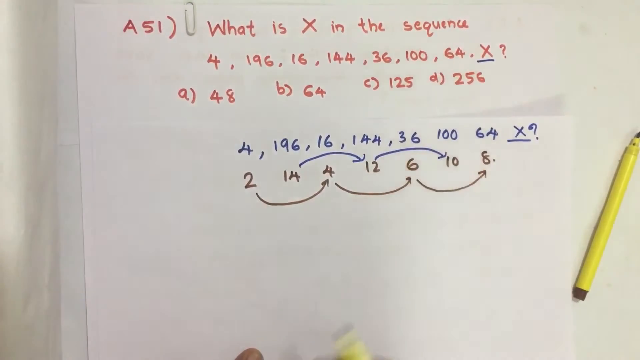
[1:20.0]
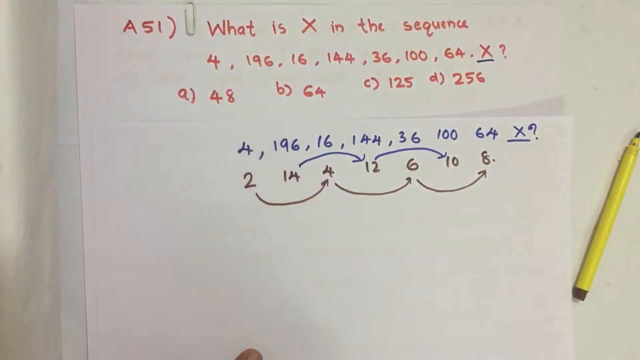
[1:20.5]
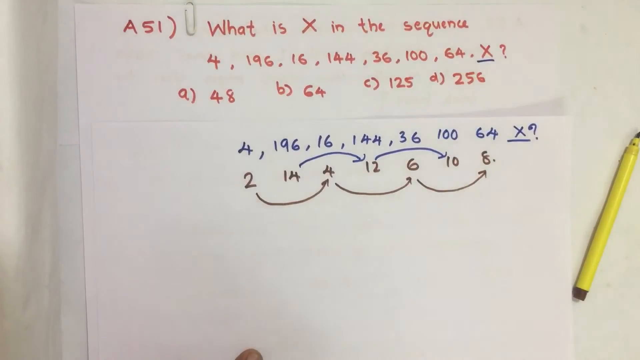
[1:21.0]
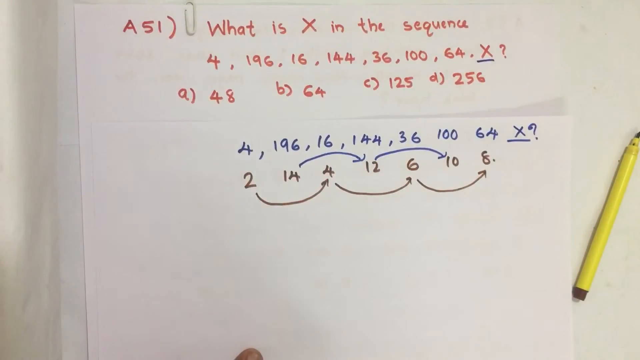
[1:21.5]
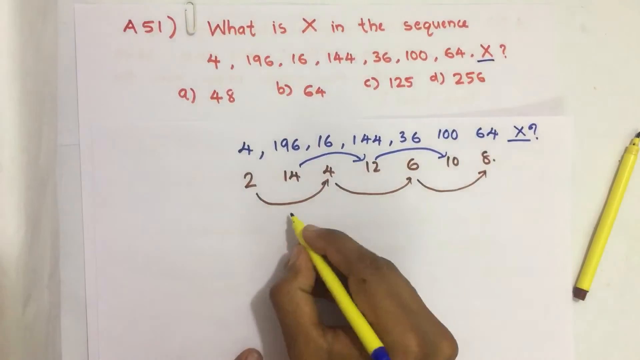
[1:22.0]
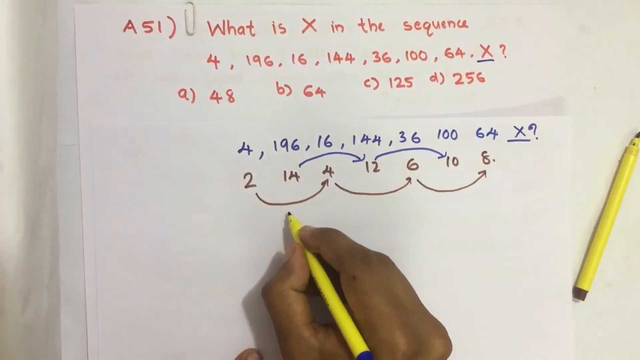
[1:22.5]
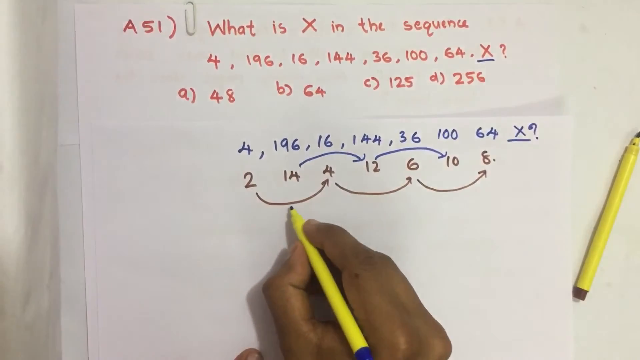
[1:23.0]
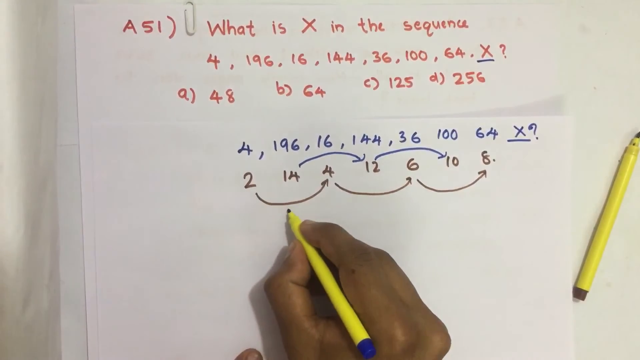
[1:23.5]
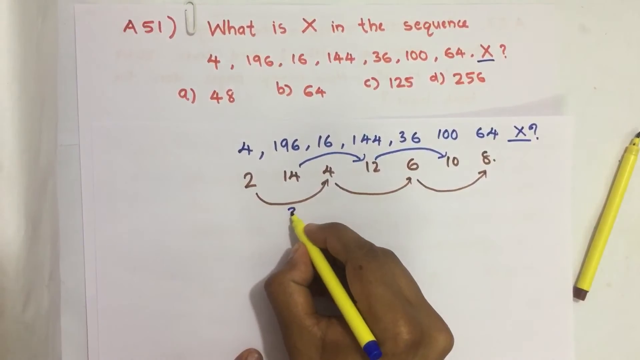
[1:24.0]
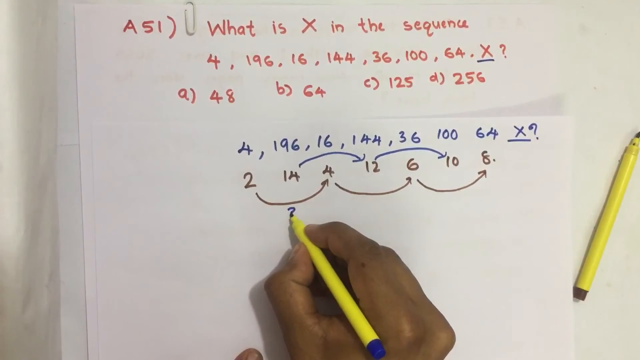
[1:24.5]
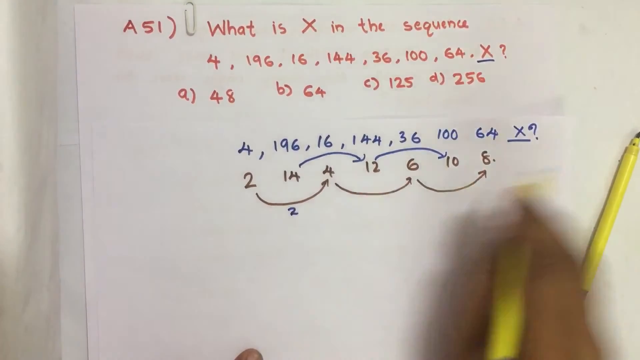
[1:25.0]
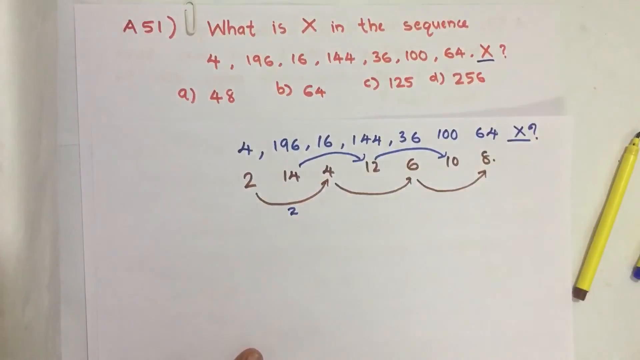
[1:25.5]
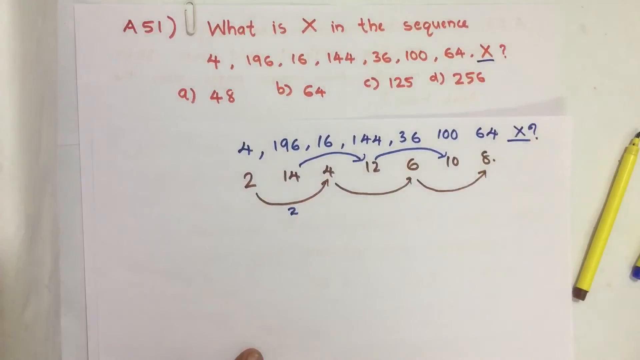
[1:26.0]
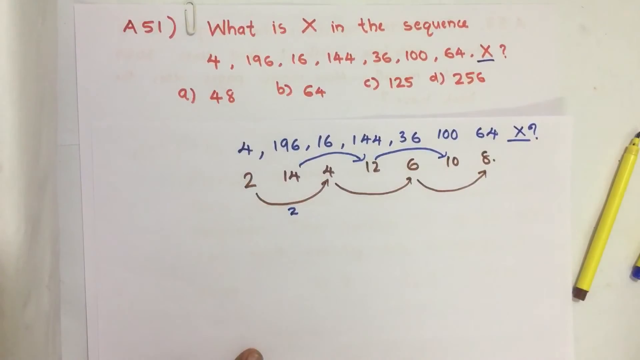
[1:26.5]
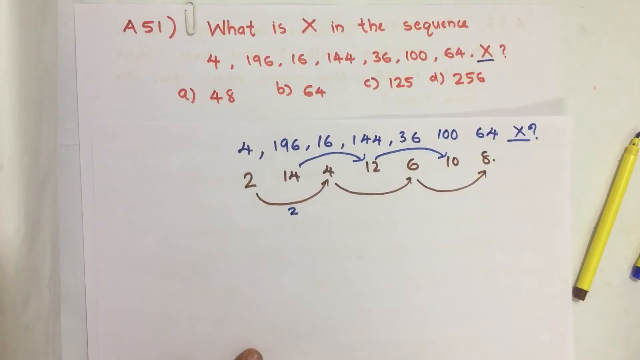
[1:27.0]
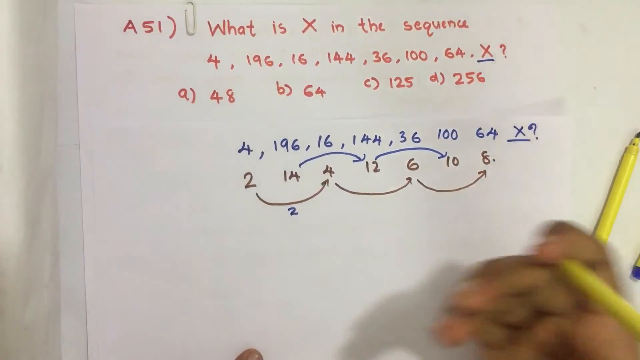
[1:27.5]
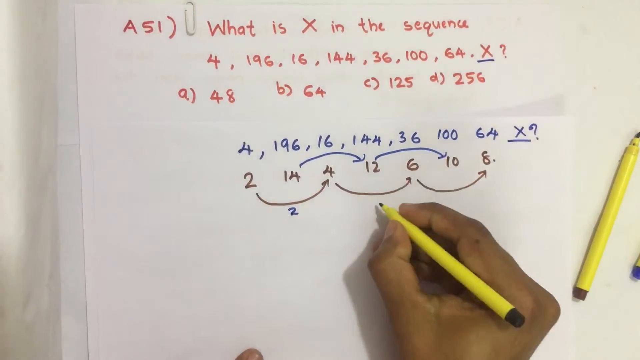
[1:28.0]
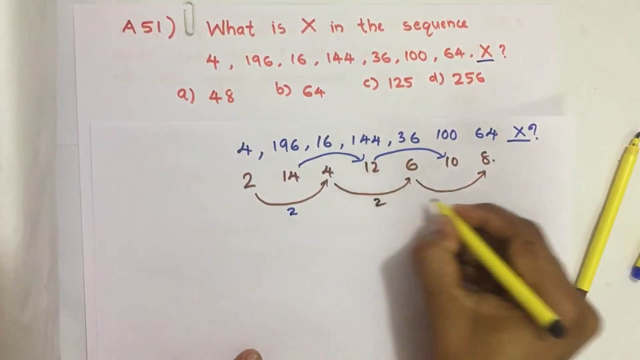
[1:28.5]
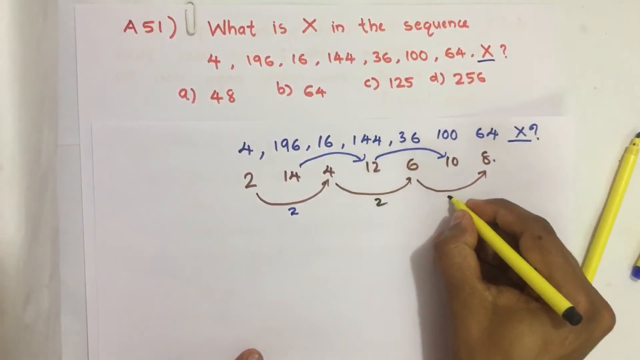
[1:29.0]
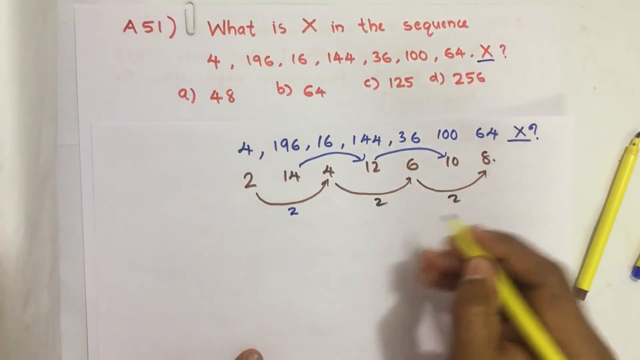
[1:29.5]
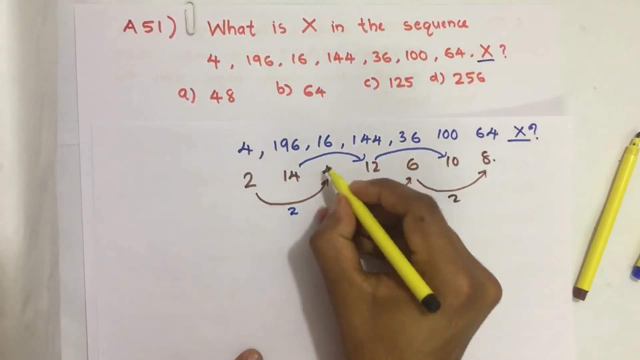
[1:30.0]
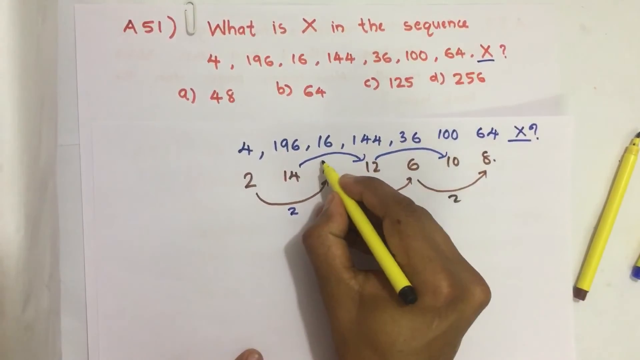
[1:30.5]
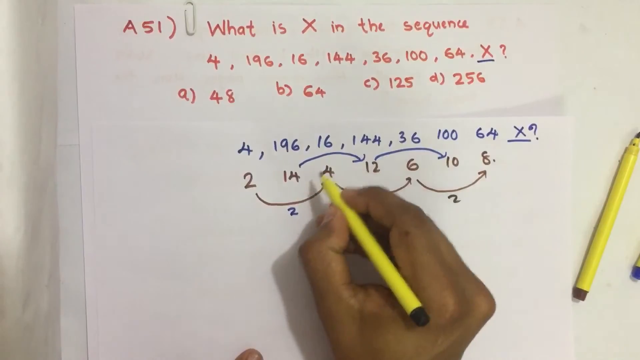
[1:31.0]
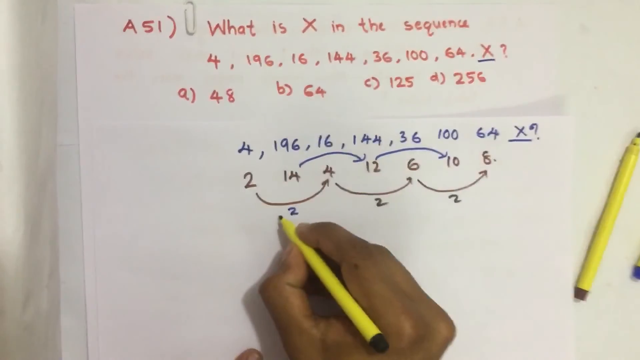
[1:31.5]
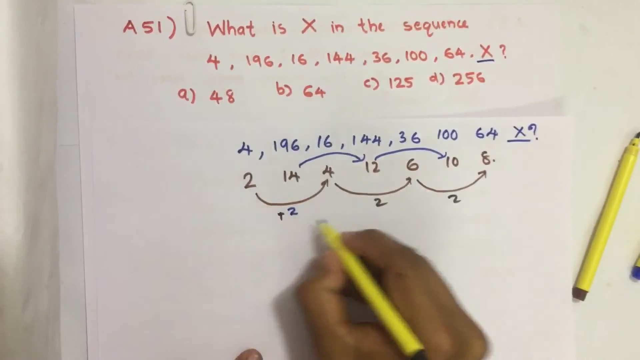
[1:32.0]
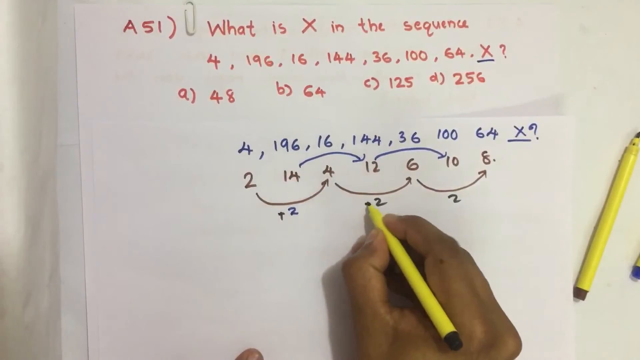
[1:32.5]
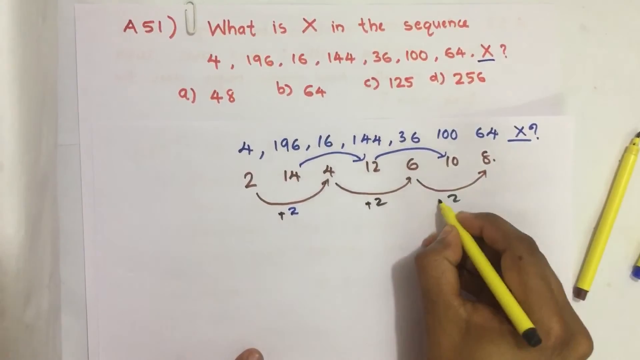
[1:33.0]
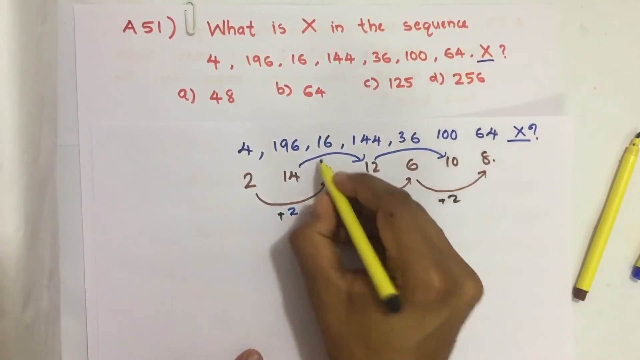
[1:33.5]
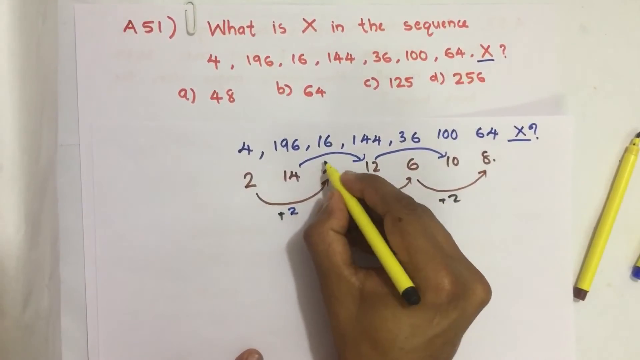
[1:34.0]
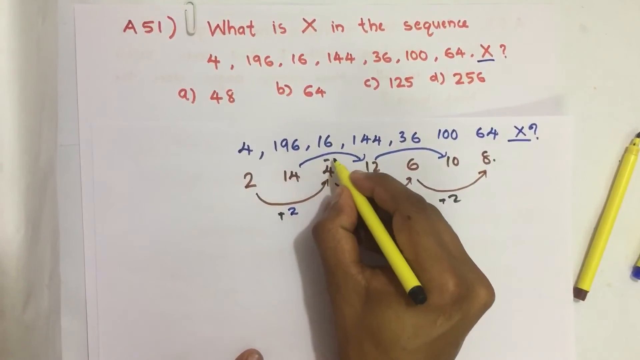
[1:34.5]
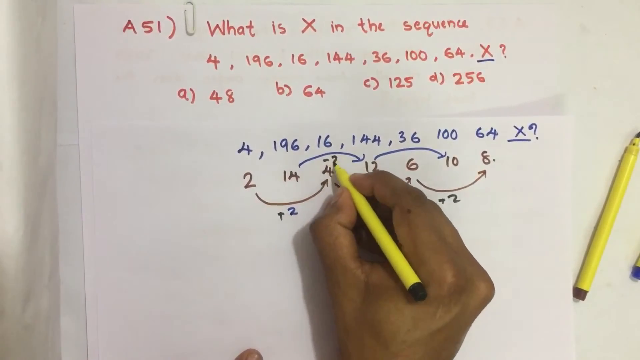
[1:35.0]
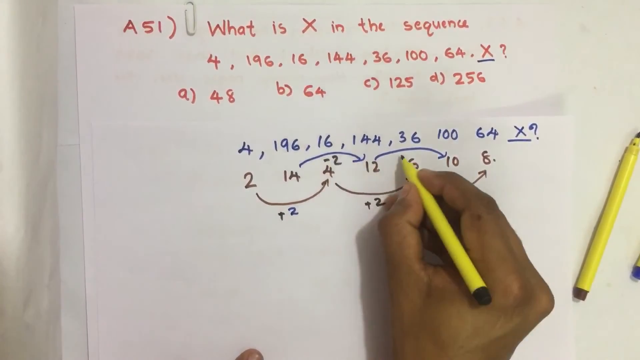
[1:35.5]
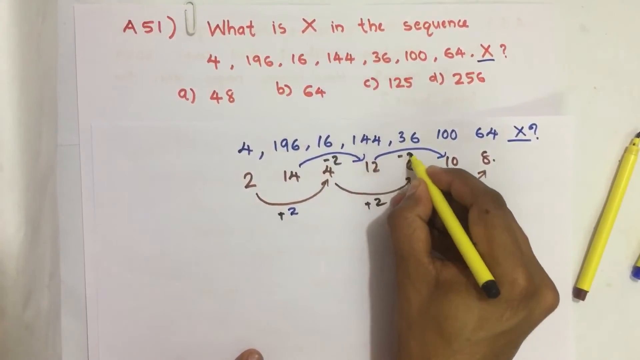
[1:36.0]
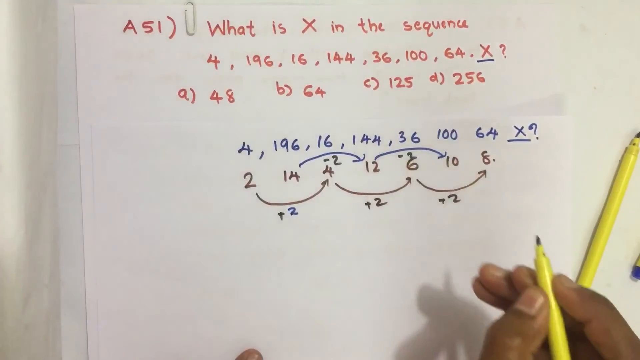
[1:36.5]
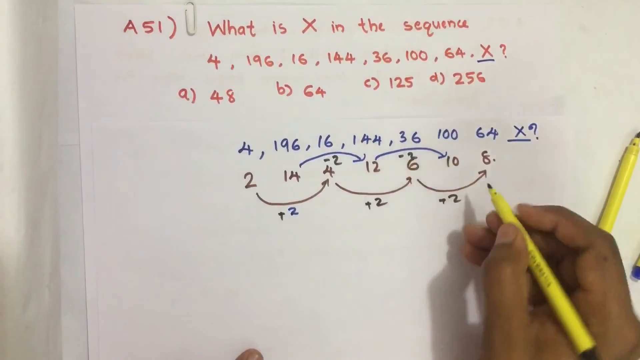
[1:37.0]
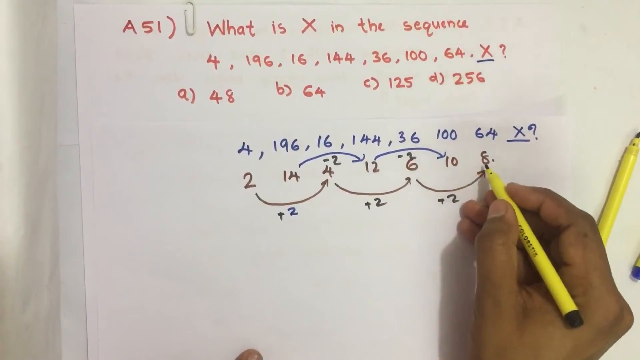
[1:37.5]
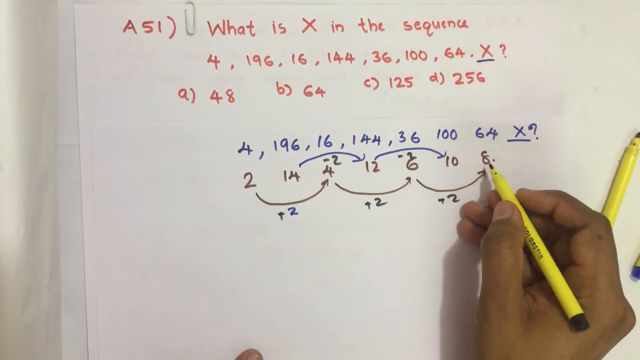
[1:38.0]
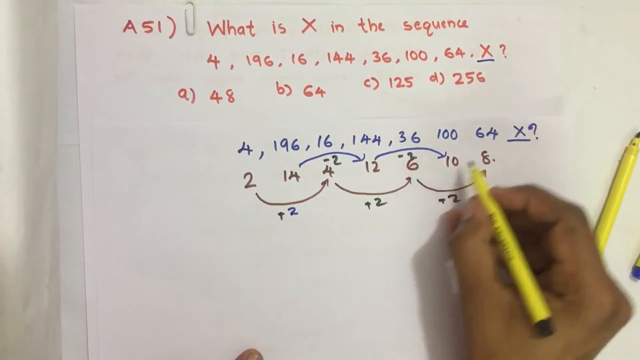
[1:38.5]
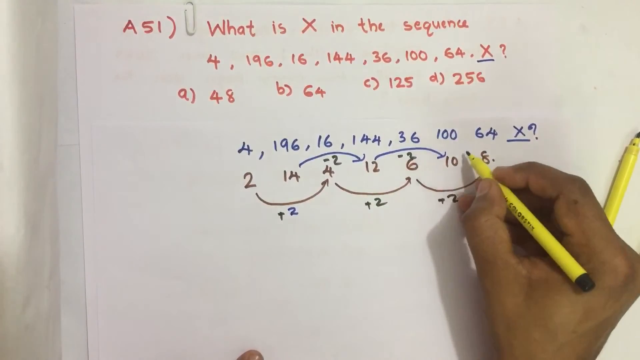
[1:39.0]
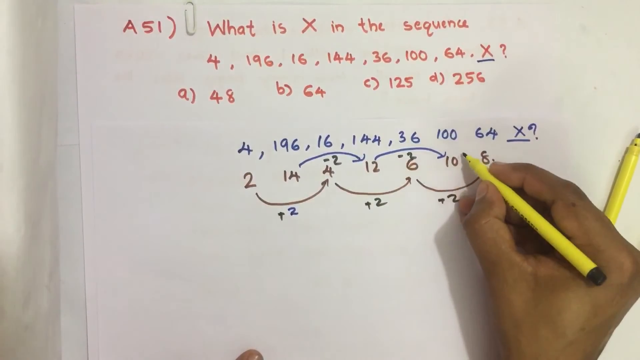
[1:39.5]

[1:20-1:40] The same white piece of paper with the paper clip at the top and the writing in red shows the sequence rewritten in blue and the square roots of the numbers in pencil. The person writes plus 2 and minus 2 on the pattern to show that every other number goes up by 2 and every other number goes down by 2.